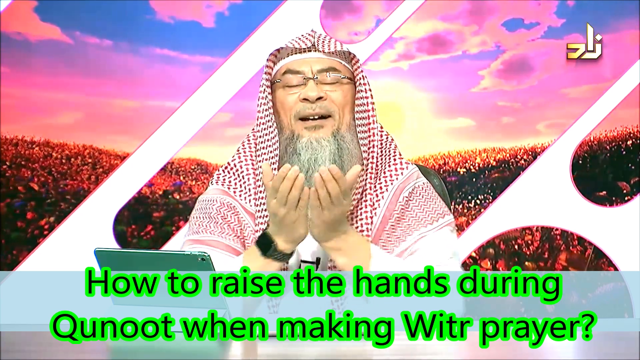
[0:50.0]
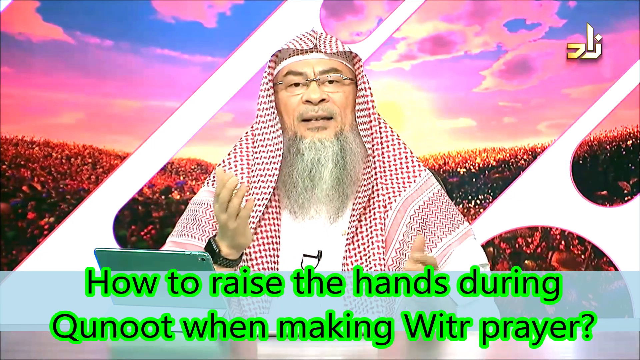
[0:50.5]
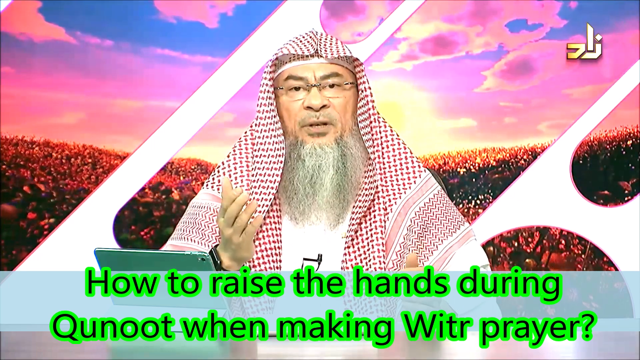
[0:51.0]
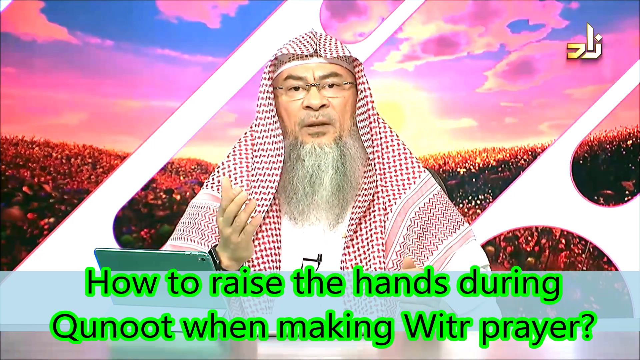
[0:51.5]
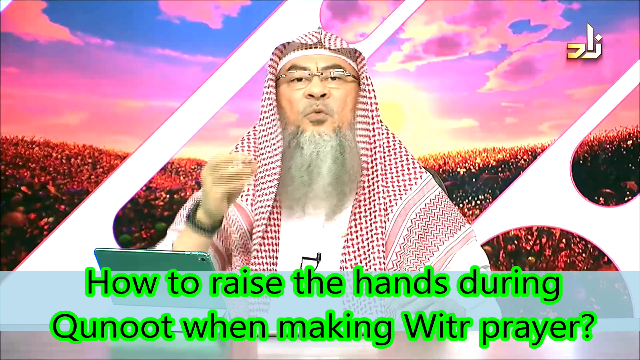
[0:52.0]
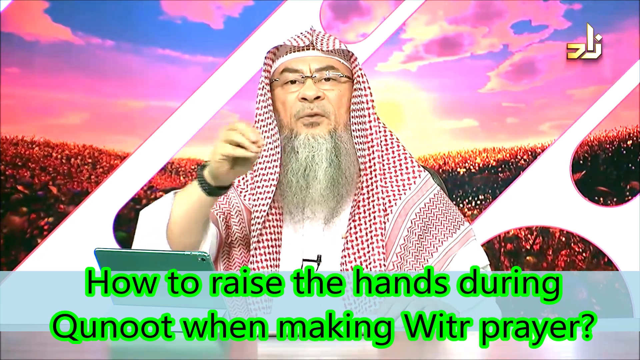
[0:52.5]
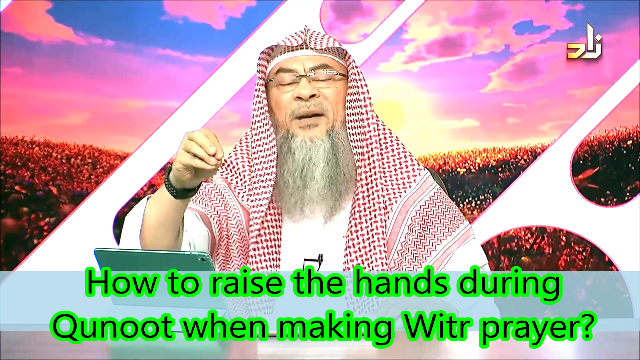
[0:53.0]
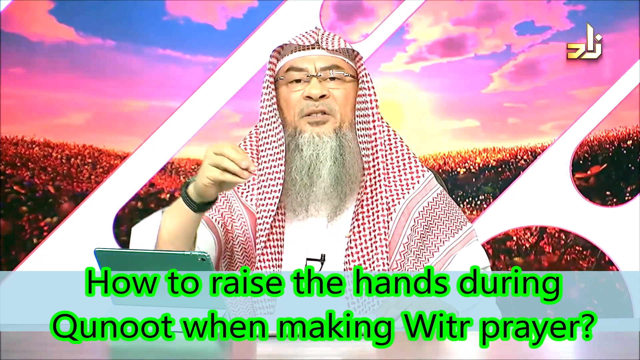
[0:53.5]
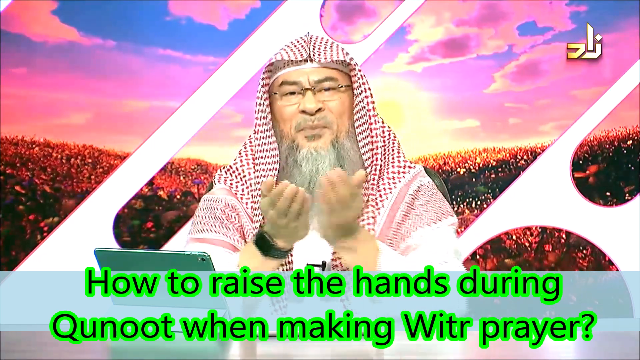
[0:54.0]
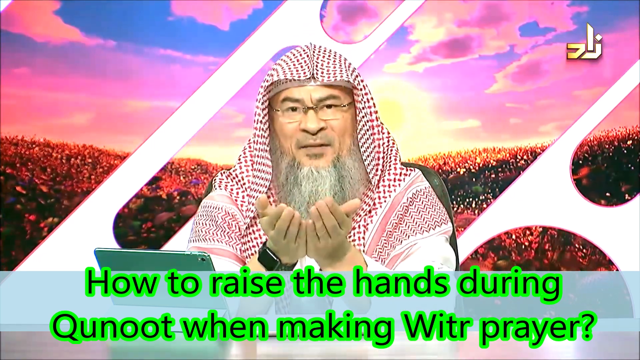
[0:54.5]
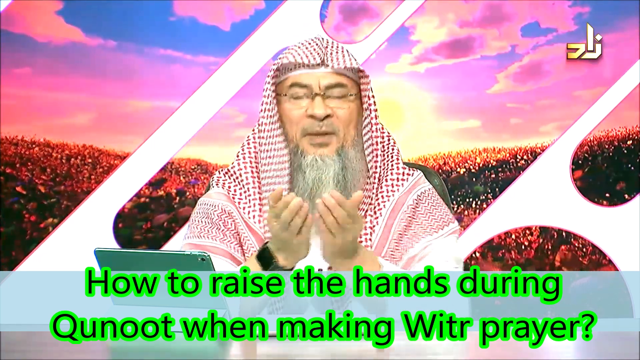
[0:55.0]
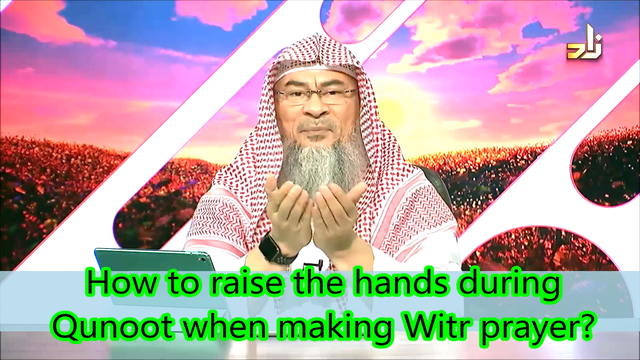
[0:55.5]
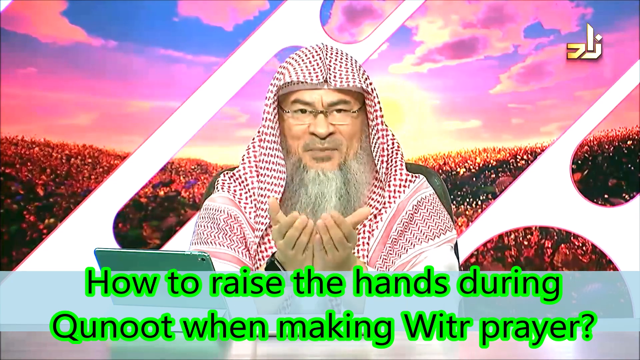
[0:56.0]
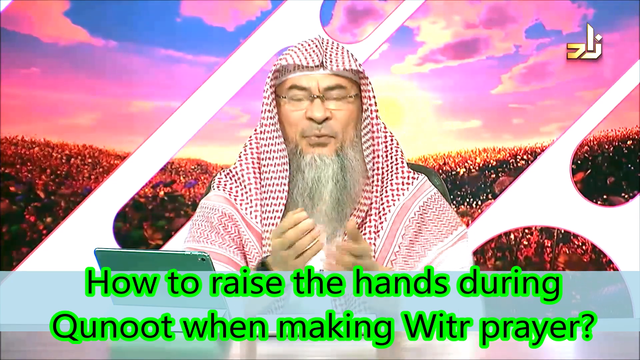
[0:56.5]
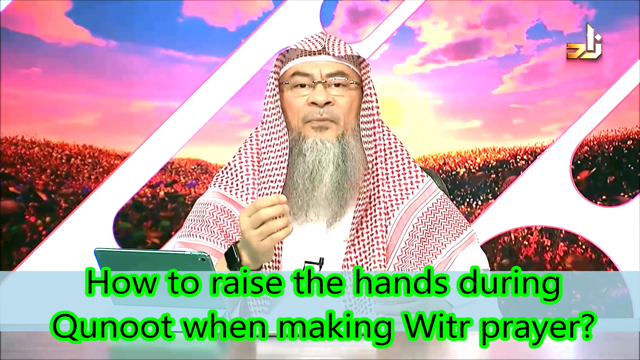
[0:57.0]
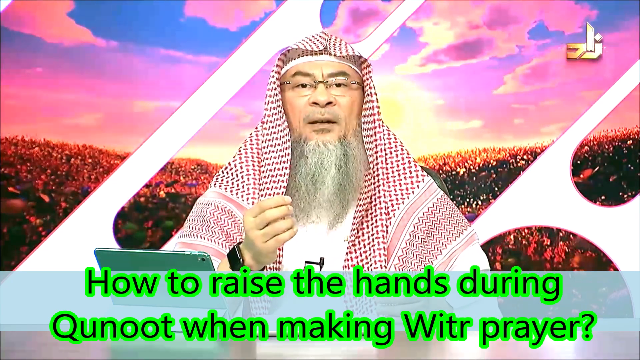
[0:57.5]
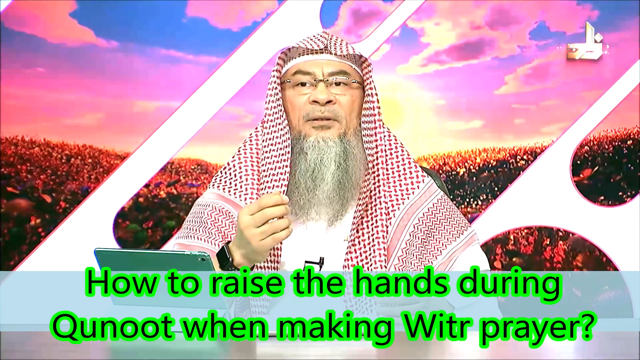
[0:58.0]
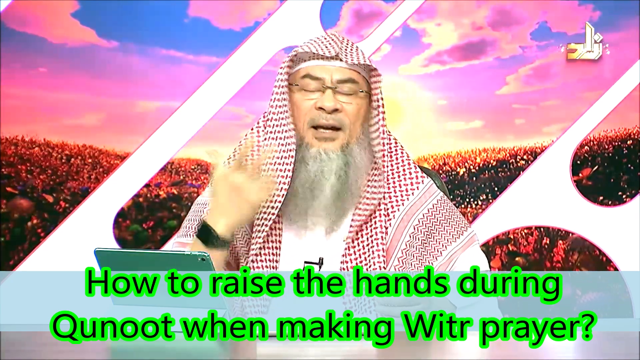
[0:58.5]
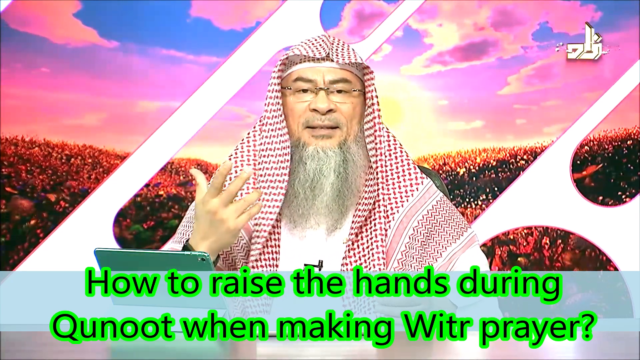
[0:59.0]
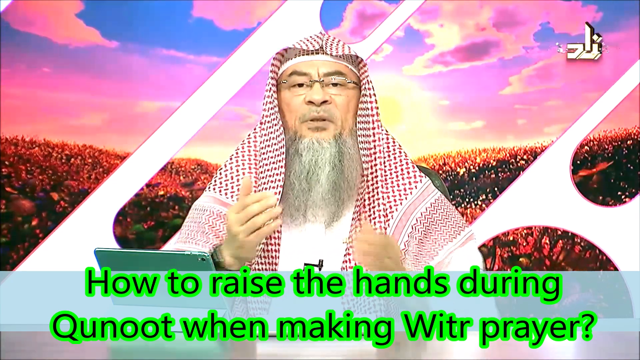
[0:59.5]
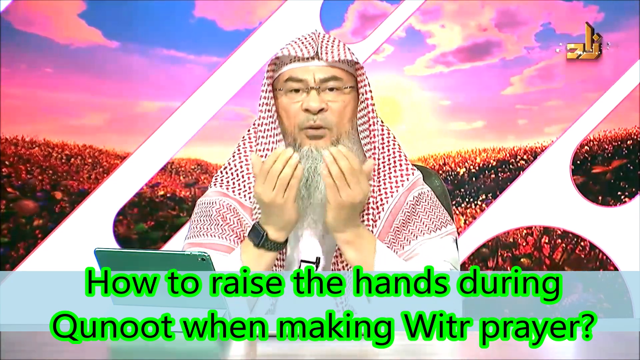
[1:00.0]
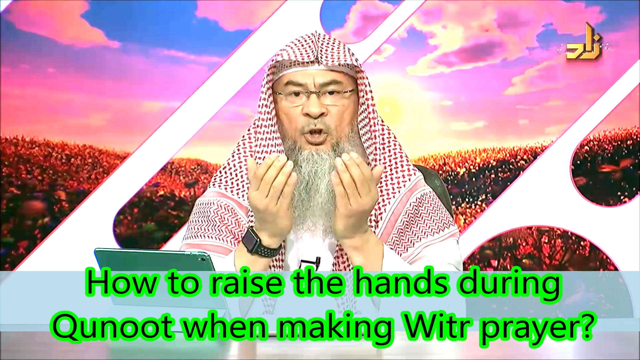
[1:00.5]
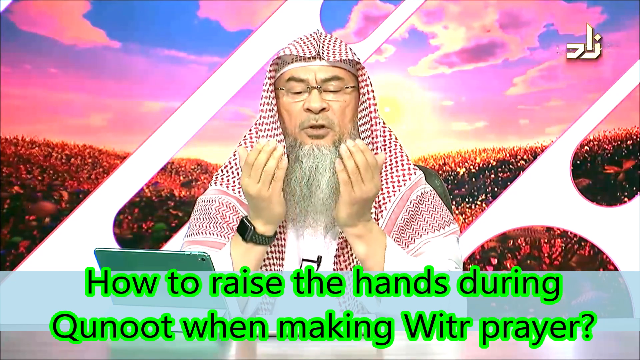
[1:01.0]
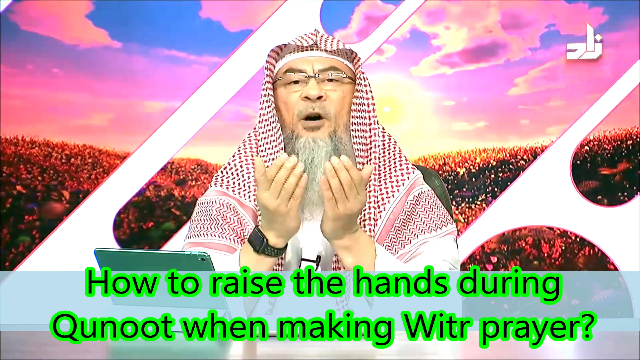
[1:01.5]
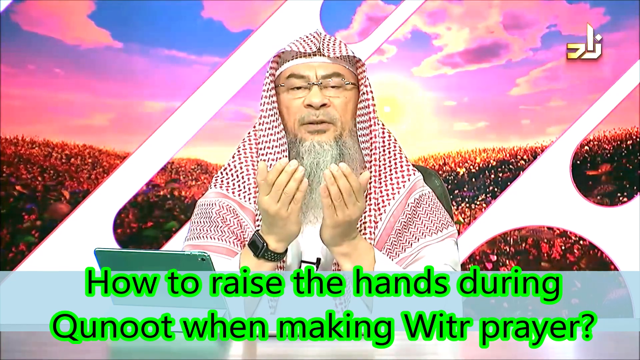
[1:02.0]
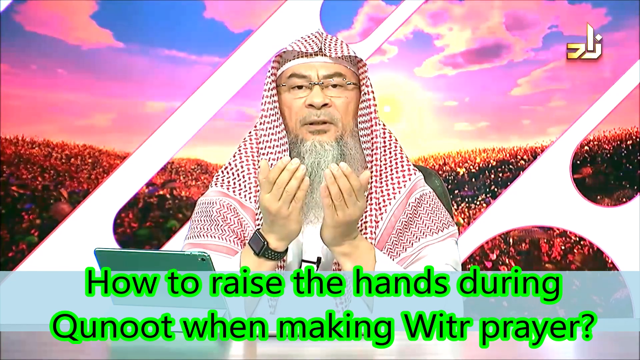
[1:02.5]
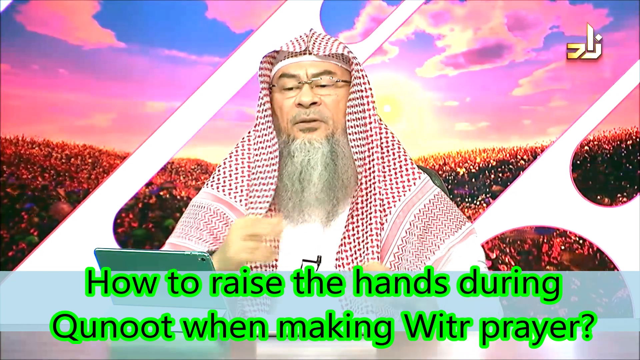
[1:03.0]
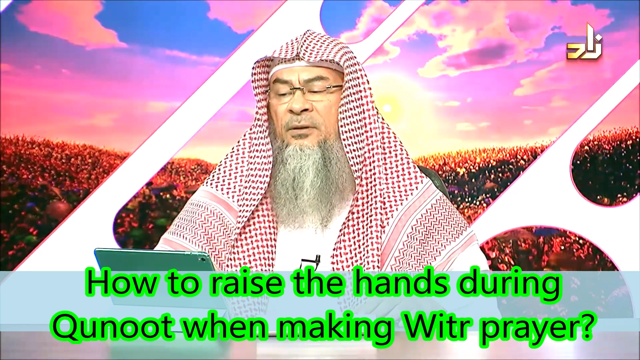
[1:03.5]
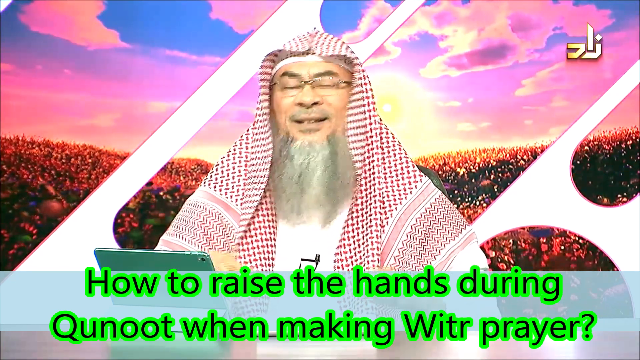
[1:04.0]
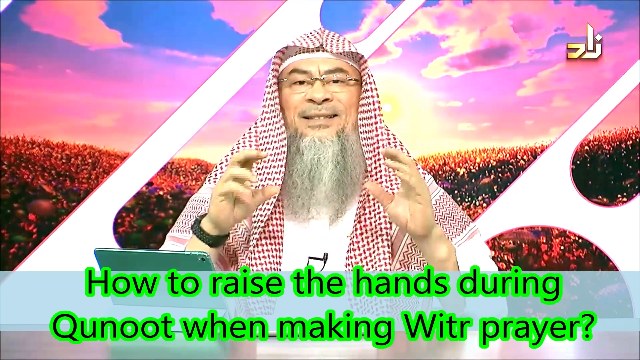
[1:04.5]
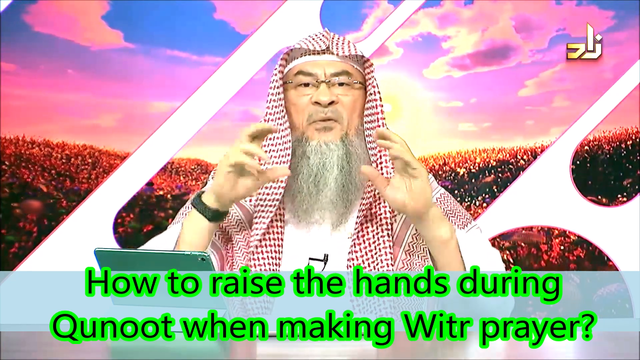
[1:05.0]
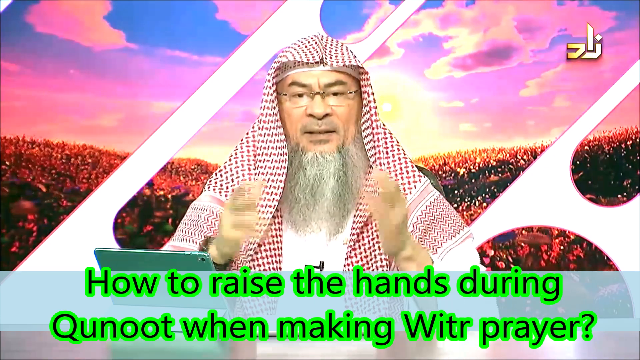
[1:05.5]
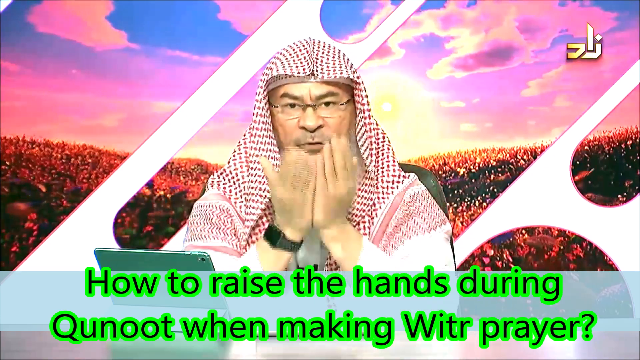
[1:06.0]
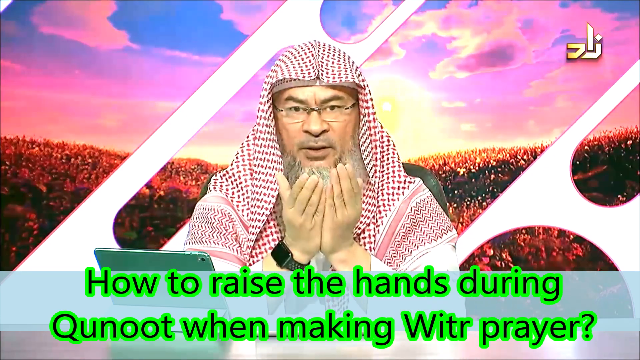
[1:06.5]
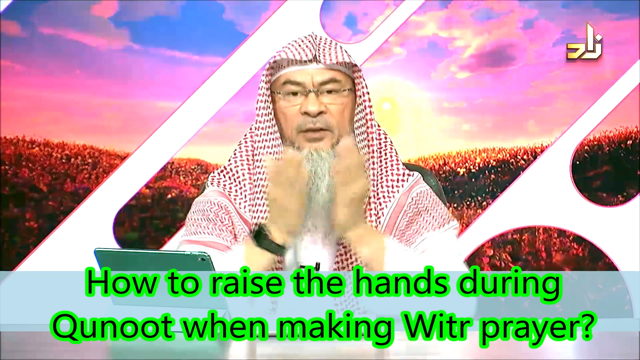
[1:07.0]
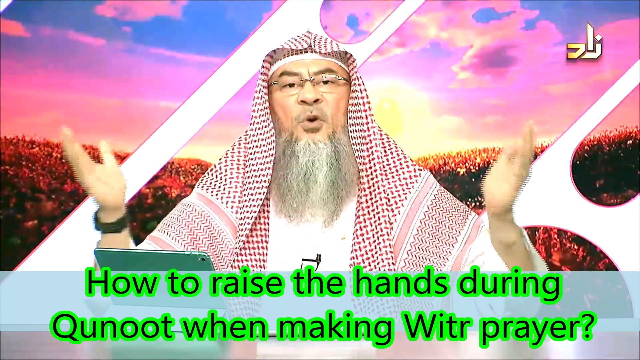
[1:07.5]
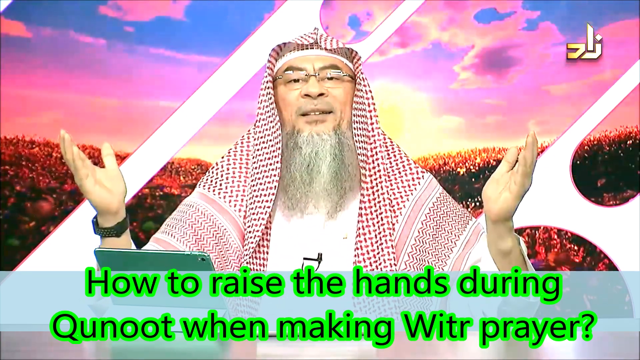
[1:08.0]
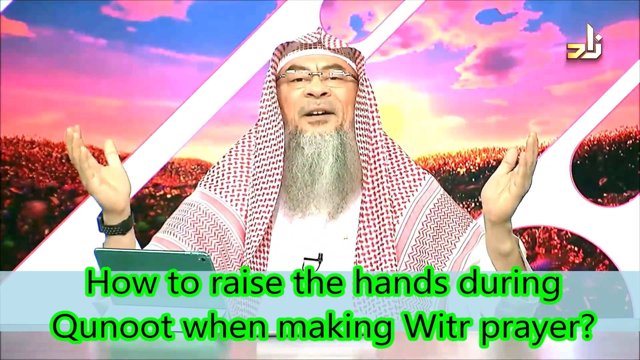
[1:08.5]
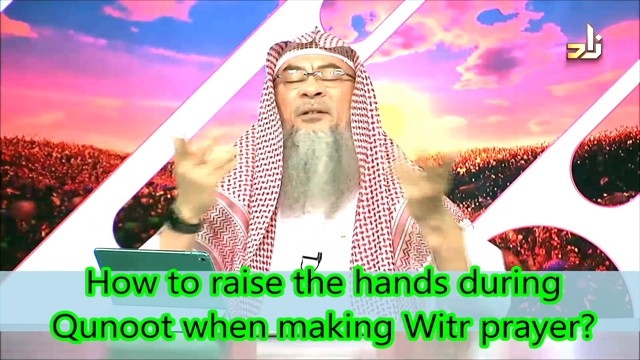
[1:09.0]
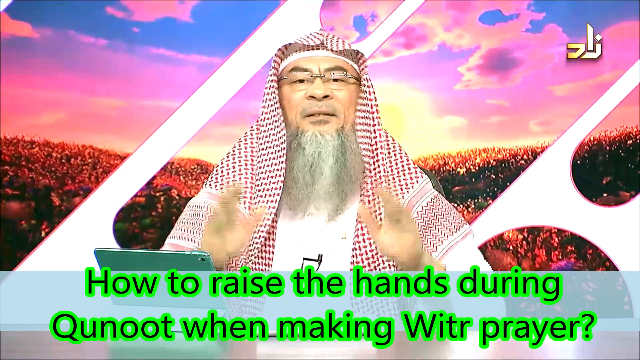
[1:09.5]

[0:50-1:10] The man continues answering the question on the screen, "how to raise the hands during Qunoot when making witr prayer", which is shown at the bottom of the screen in black text with a green highlight around it. The sheikh, or religious figure, is behind a desk with an iPad in front of him that he is reading from, and he has an Apple Watch on his hand. He makes a cupping motion with his hands directly in front of him, as if holding something, and appears to be explaining the motion to the audience, probably how to position the hands during this prayer. Eventually he raises his hand. He is sitting in front of a screen in the background showing different shapes that appear to form a scene of flowers, with a pink sky, apparently at sunrise or sunset.